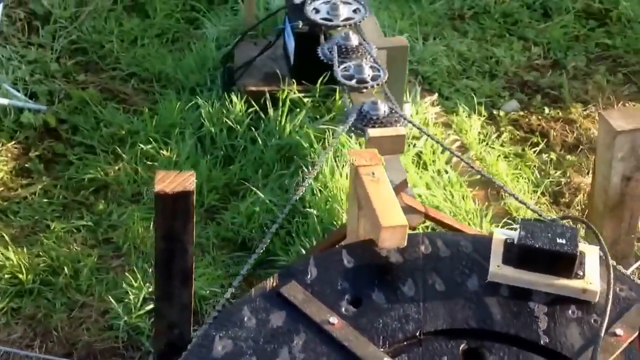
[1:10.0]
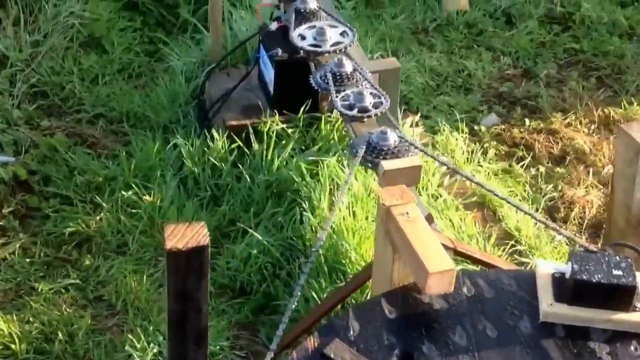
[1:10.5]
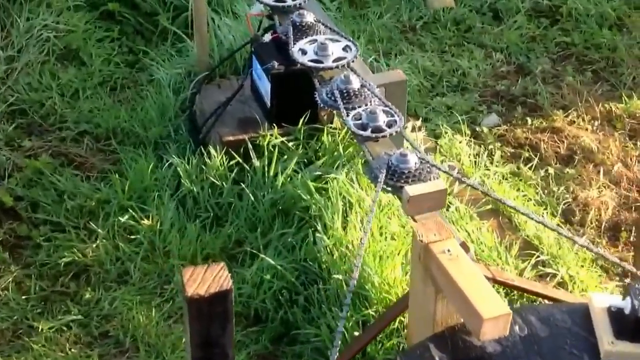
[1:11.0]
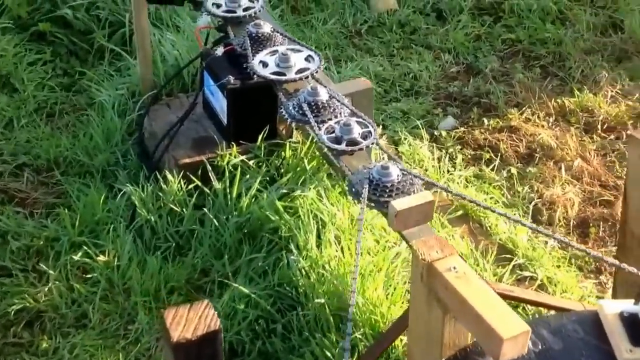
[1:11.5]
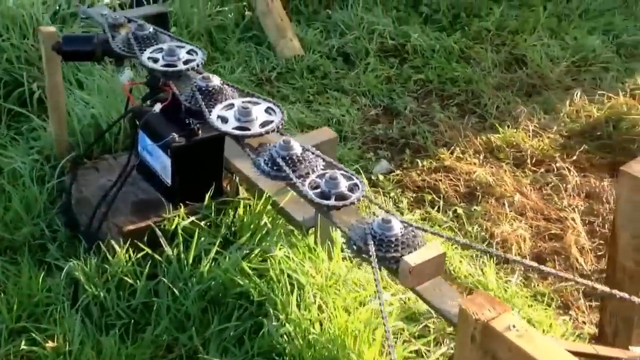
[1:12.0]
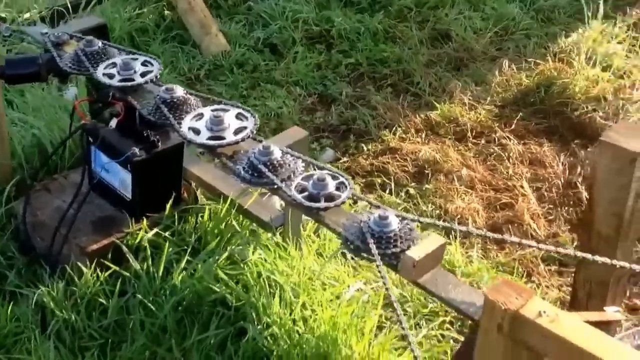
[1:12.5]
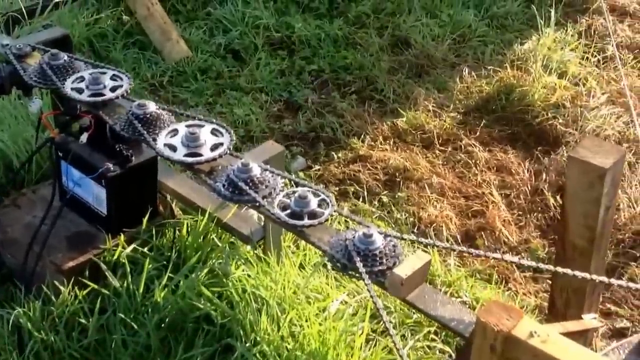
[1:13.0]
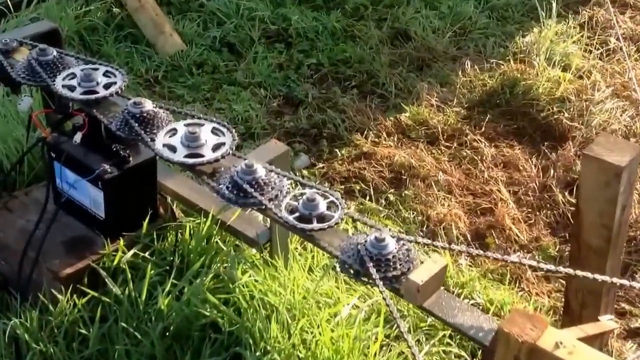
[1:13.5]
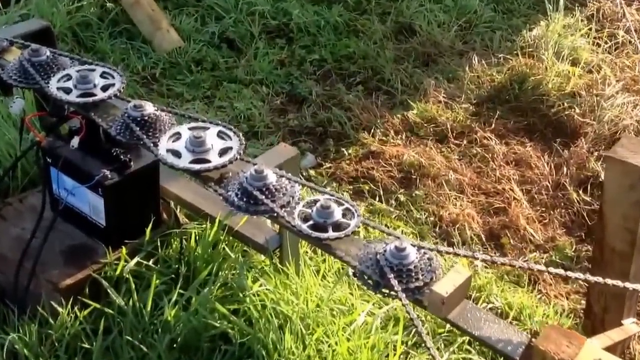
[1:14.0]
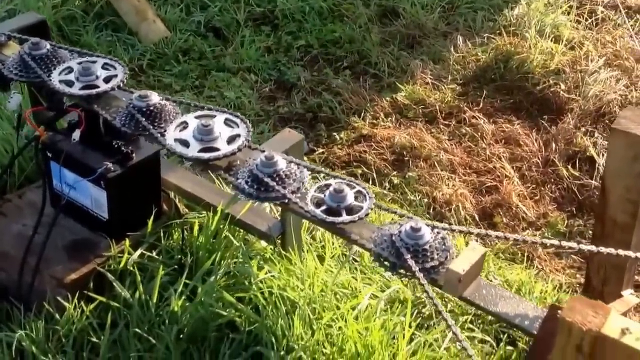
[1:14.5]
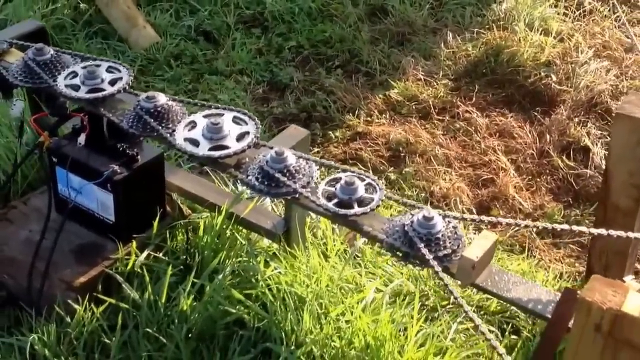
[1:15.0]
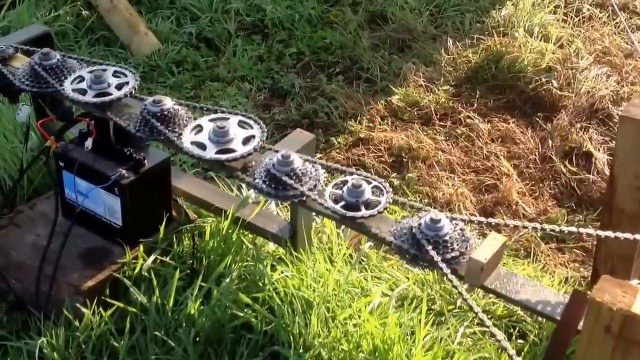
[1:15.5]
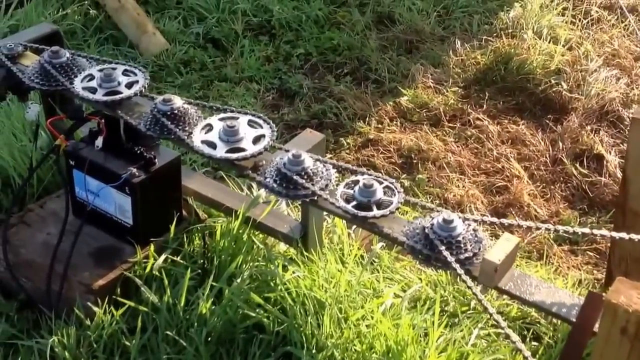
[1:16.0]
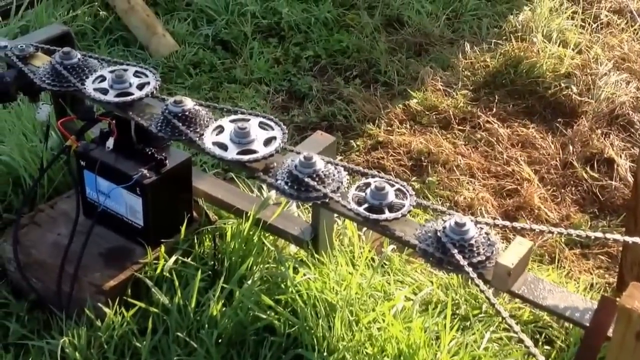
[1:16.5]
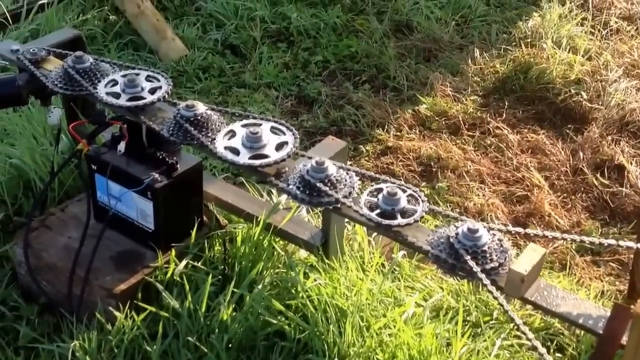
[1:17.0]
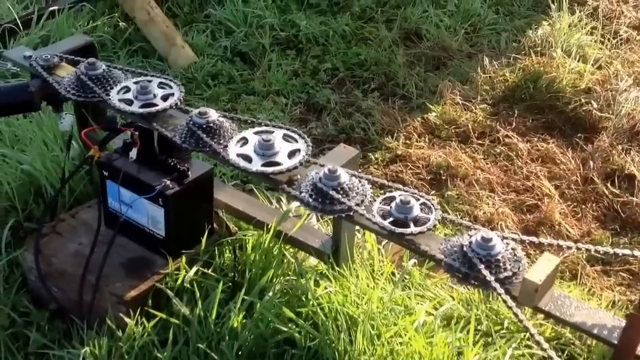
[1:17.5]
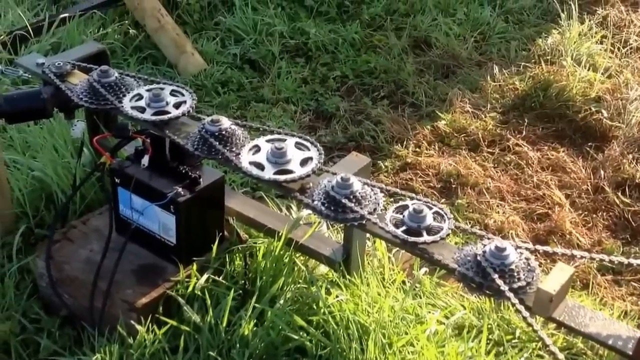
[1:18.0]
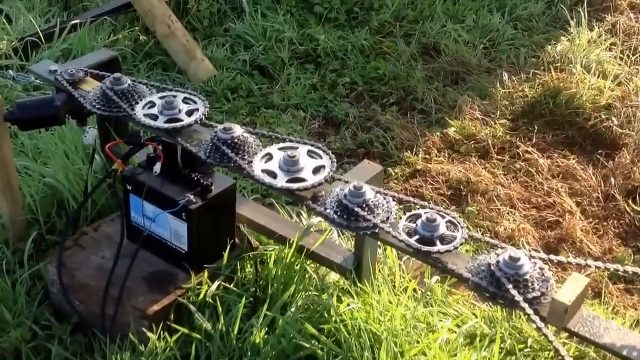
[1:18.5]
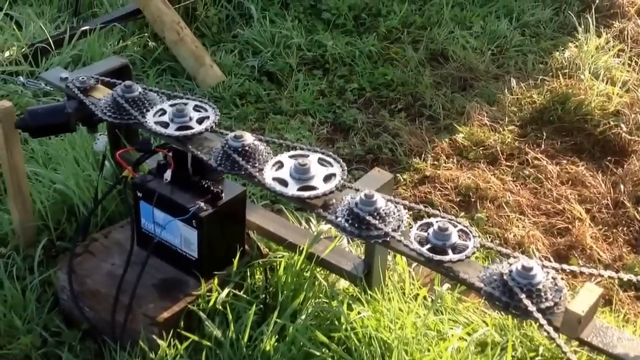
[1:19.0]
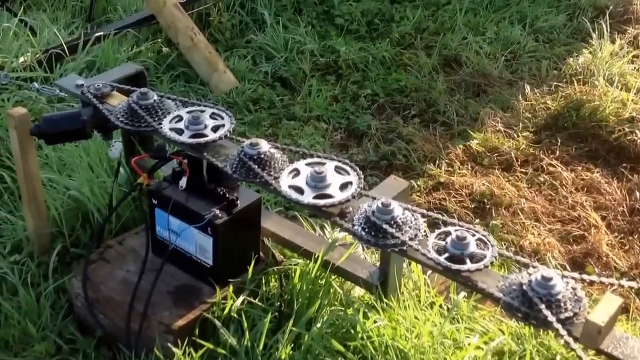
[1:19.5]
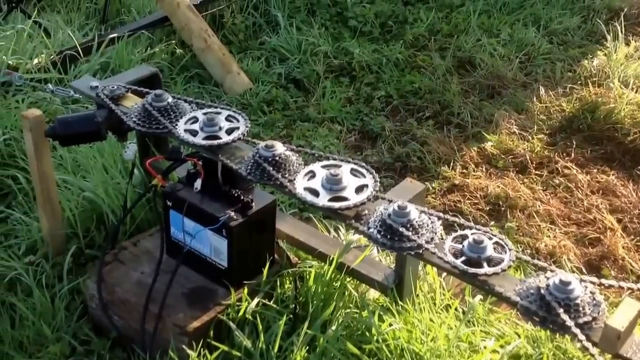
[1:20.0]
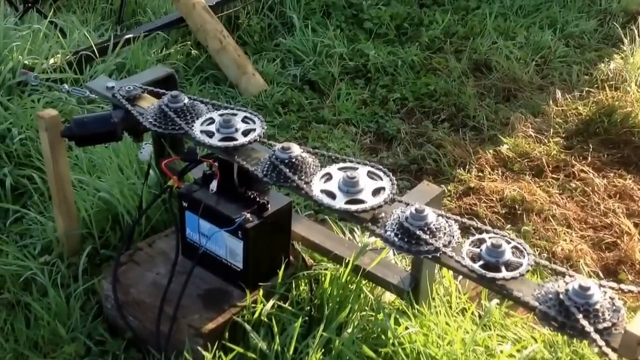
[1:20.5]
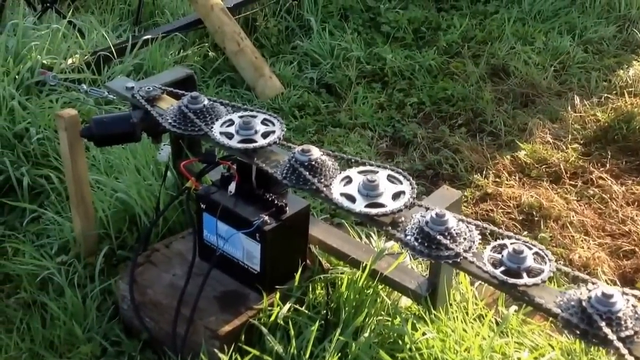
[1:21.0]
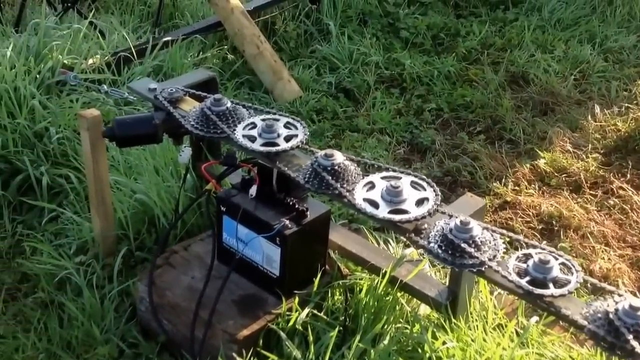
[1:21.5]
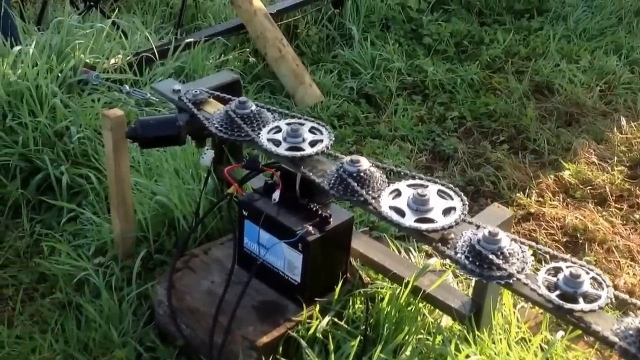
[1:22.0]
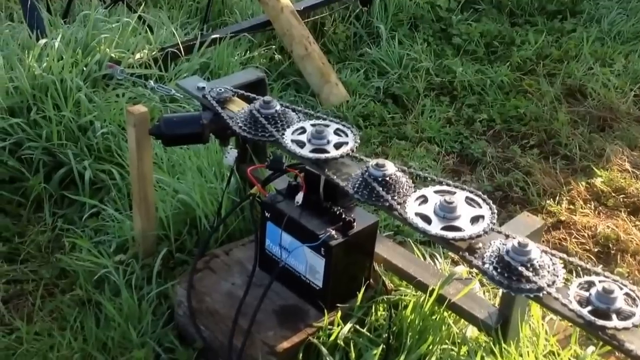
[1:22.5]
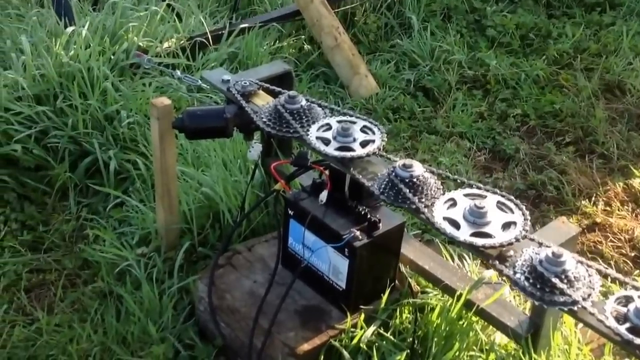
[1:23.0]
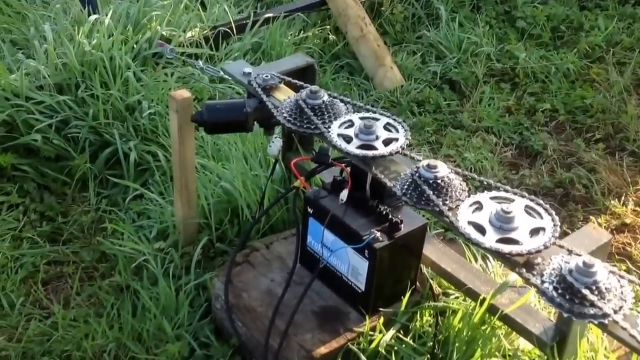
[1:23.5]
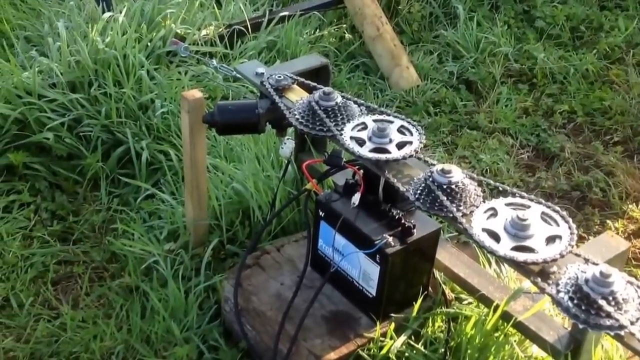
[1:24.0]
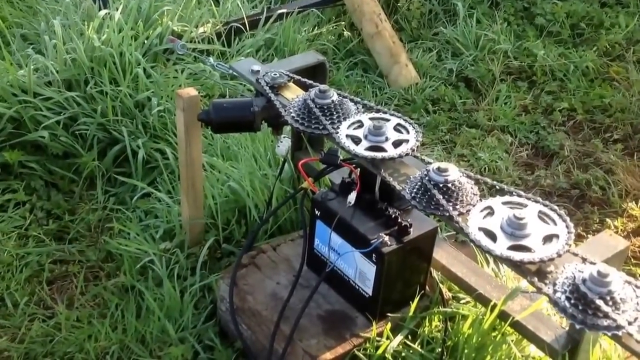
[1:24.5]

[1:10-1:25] The camera focuses on parts of metal equipment attached to the solar panels; the panels themselves are not visible in this close-up. There is what looks like a flat iron rod with six different wheels on it that look like pulleys, with a chain running across each pulley. They look like discs, with the chains driving the discs. A black box that looks like some kind of battery or electrical device is attached to the metal rod with the pulleys, and black wires are attached to the battery box. To the right is a wooden peg, and in the back are patches of green grass mixed with brown grass. The camera pans closer and moves from right to left, giving a close-up view of the entire equipment.